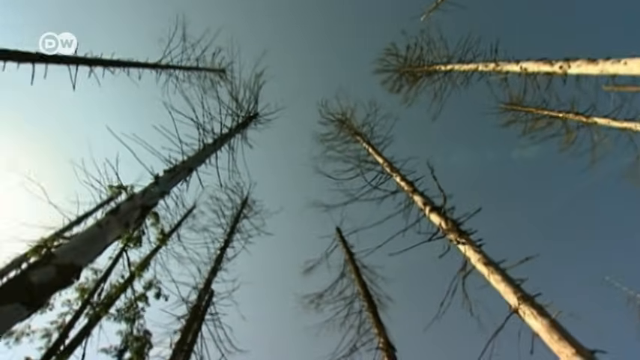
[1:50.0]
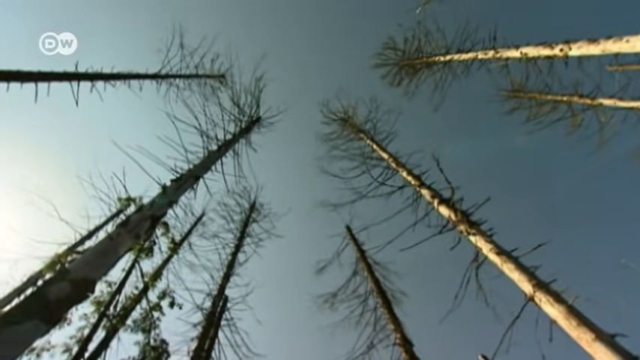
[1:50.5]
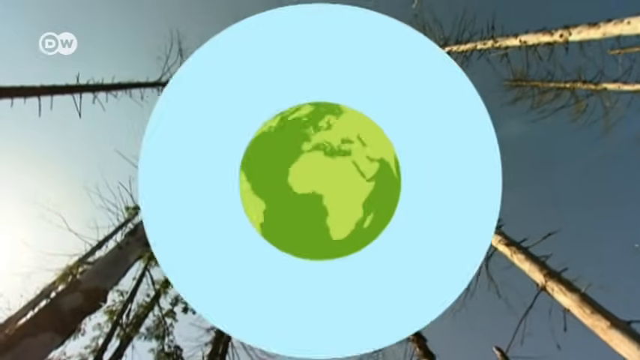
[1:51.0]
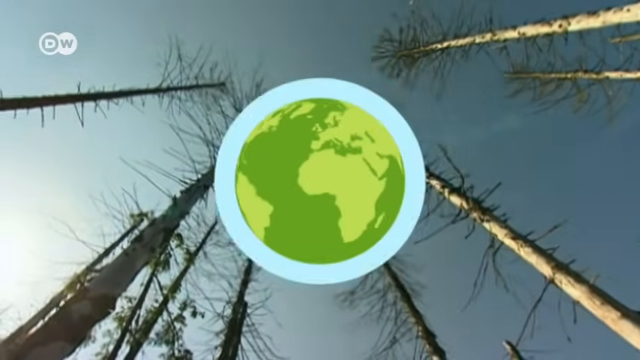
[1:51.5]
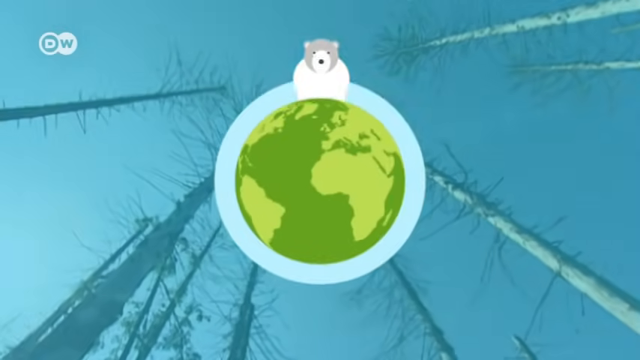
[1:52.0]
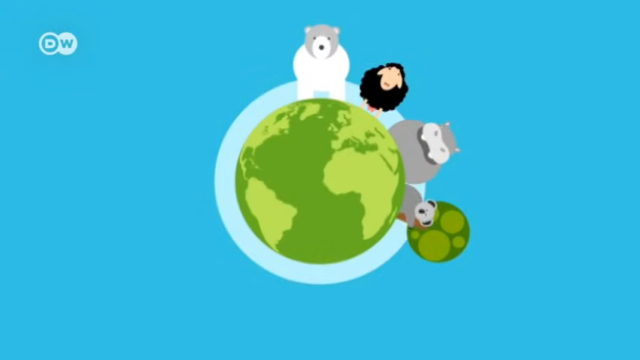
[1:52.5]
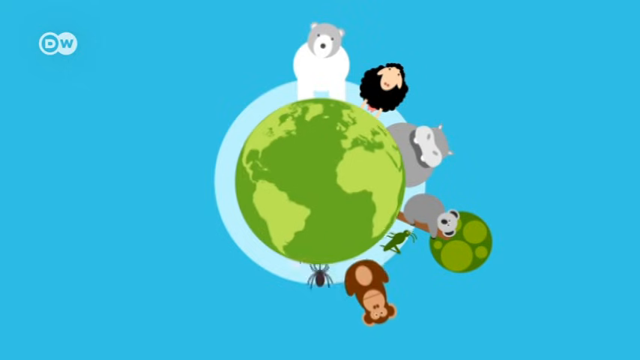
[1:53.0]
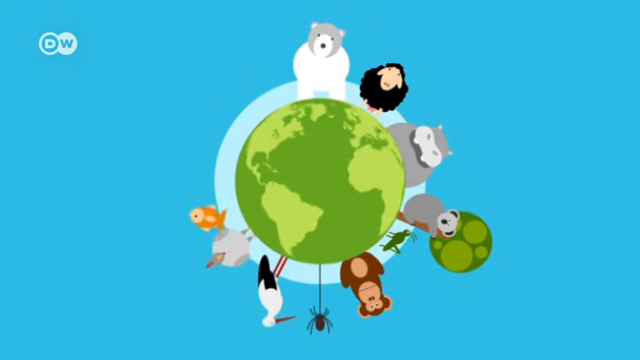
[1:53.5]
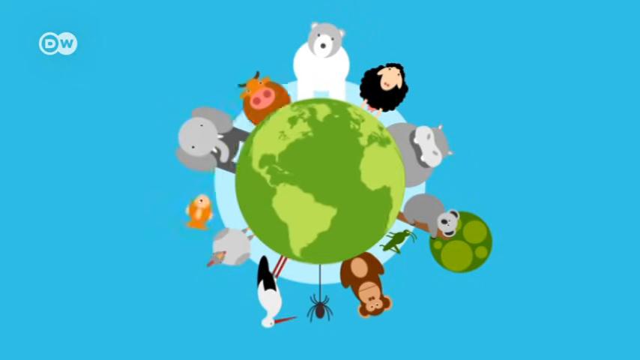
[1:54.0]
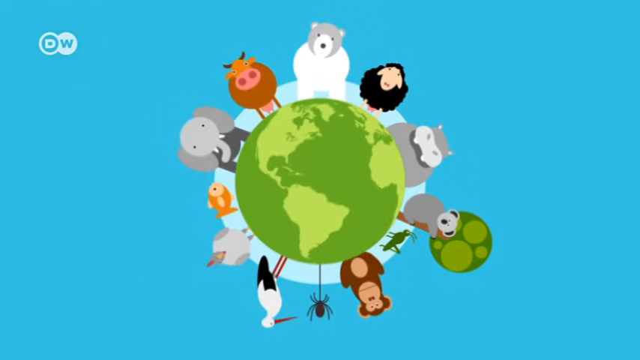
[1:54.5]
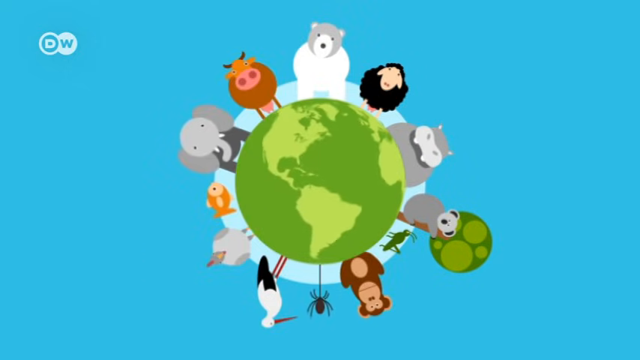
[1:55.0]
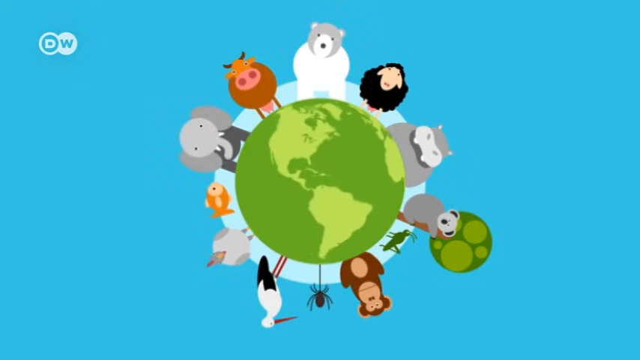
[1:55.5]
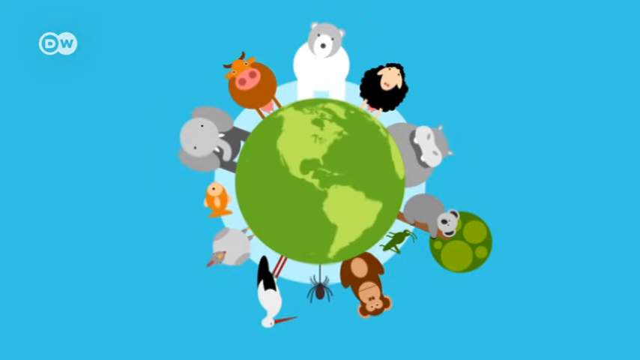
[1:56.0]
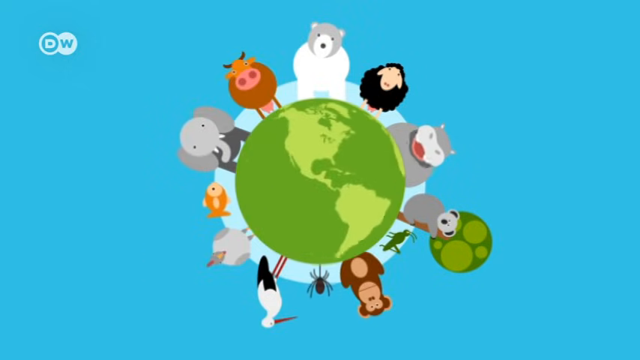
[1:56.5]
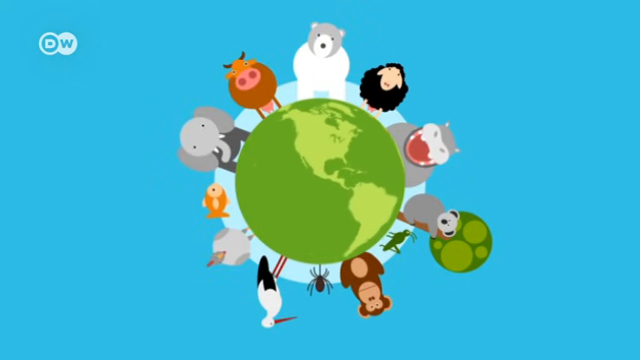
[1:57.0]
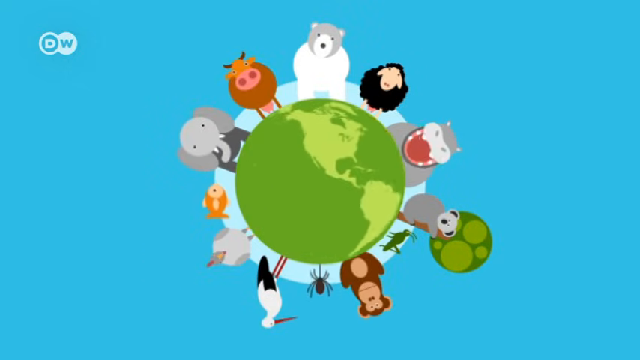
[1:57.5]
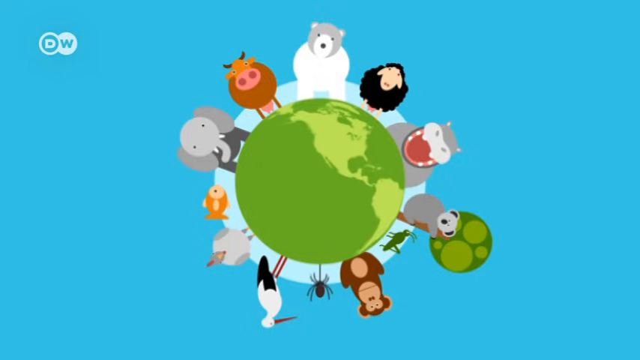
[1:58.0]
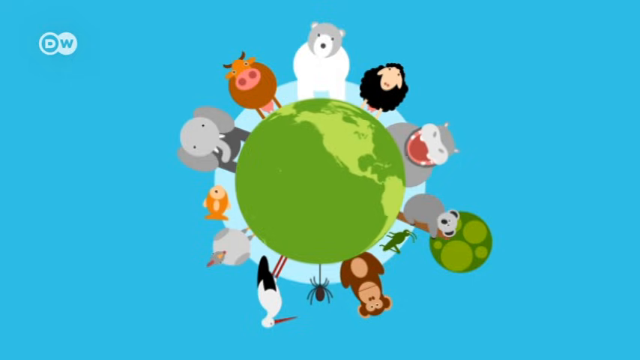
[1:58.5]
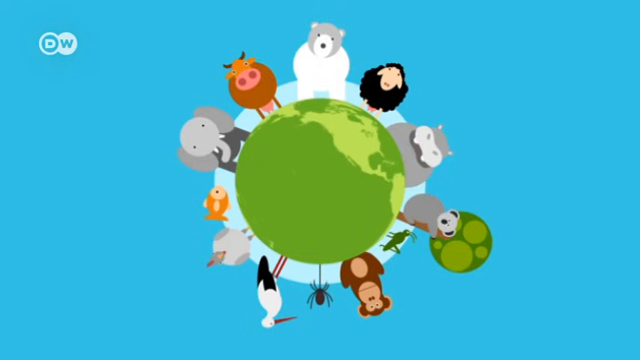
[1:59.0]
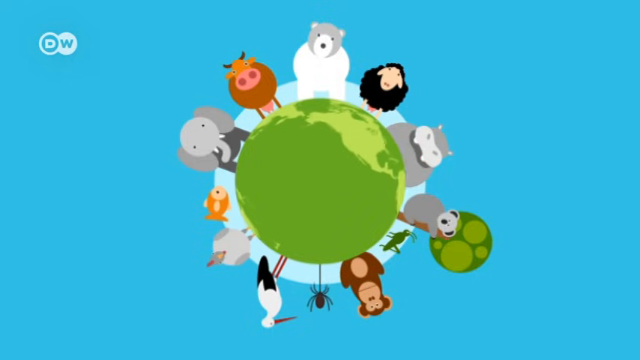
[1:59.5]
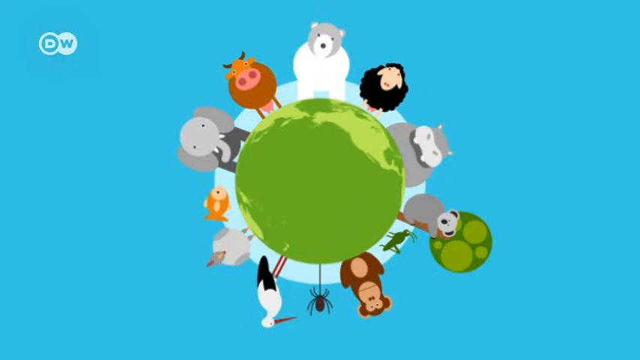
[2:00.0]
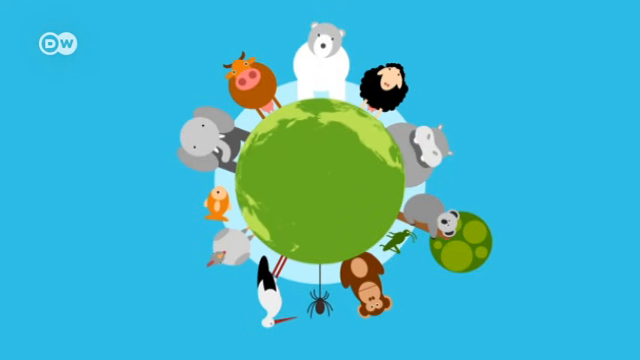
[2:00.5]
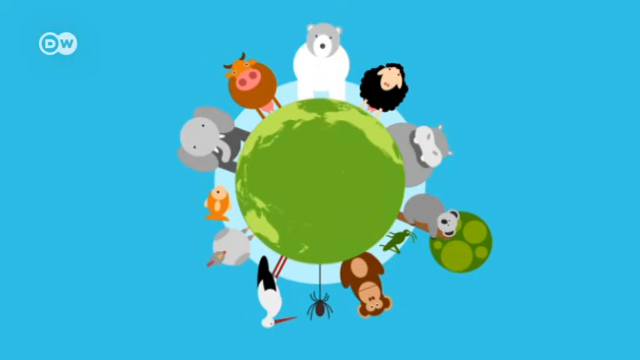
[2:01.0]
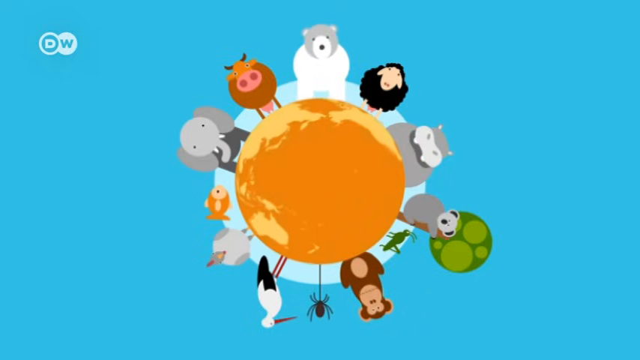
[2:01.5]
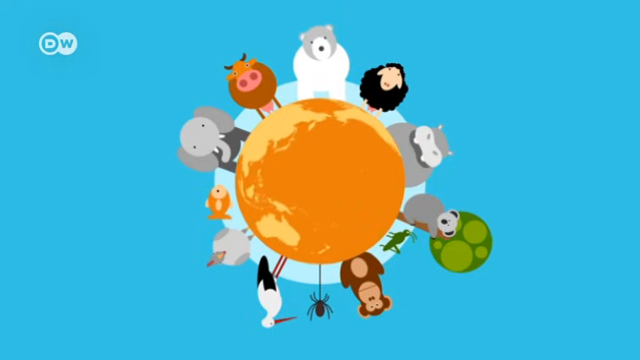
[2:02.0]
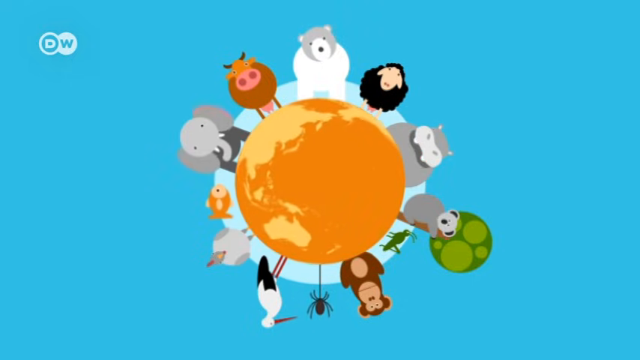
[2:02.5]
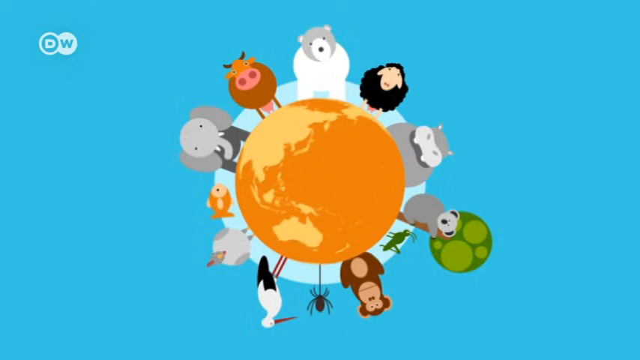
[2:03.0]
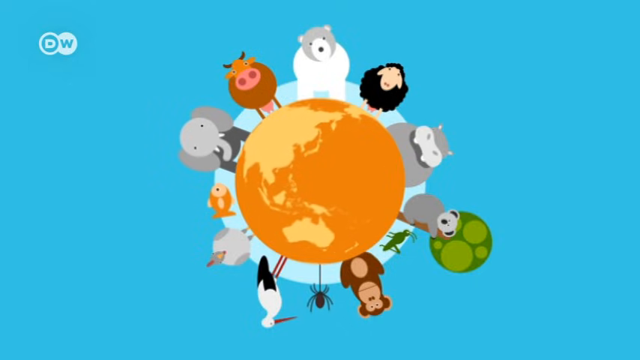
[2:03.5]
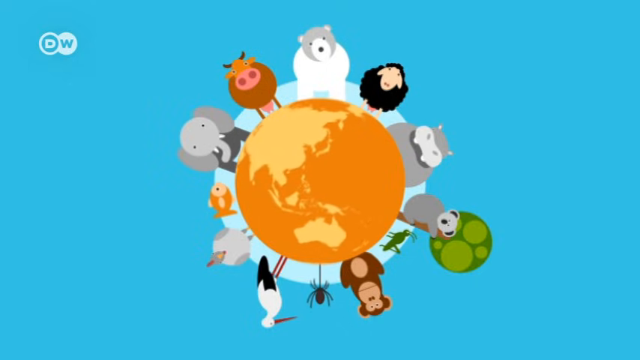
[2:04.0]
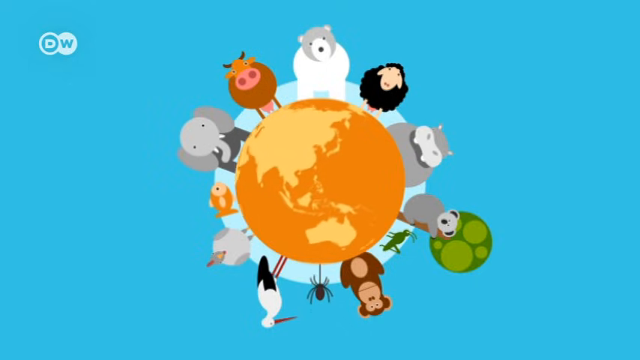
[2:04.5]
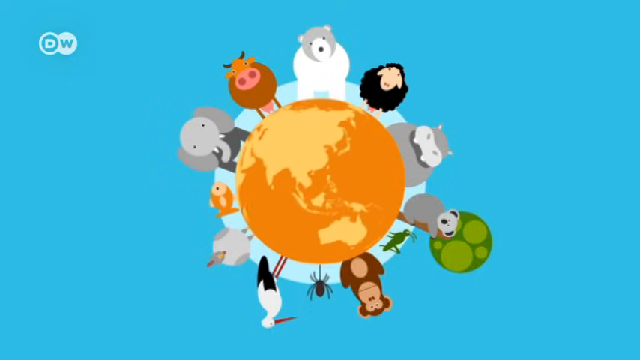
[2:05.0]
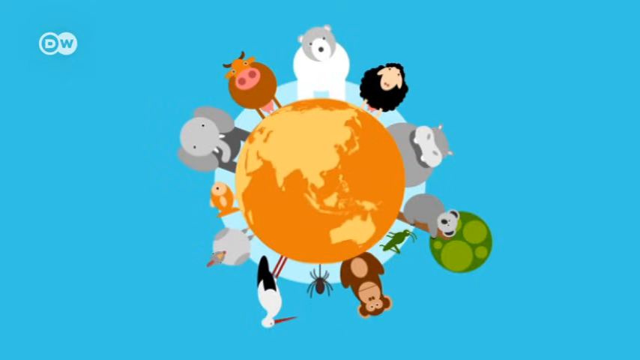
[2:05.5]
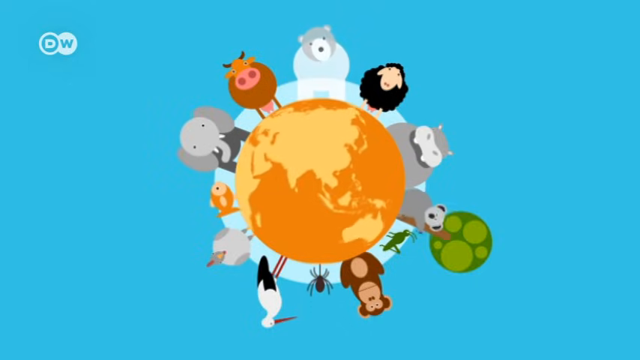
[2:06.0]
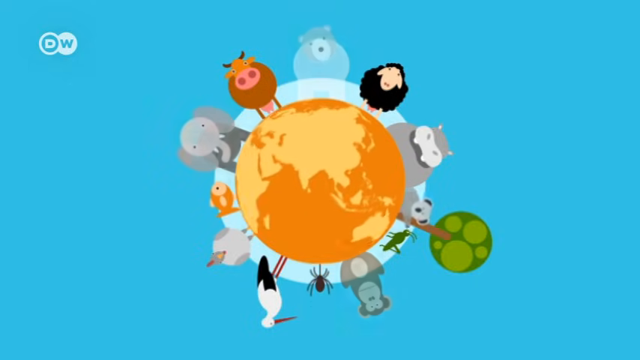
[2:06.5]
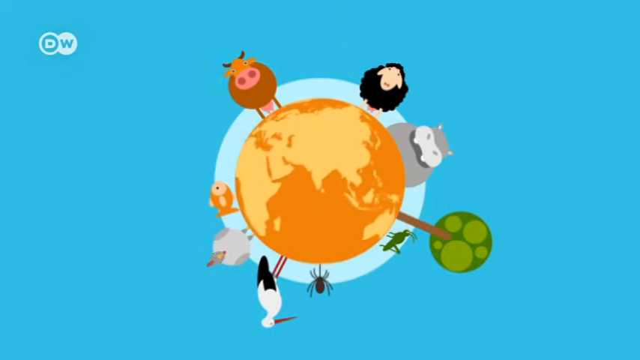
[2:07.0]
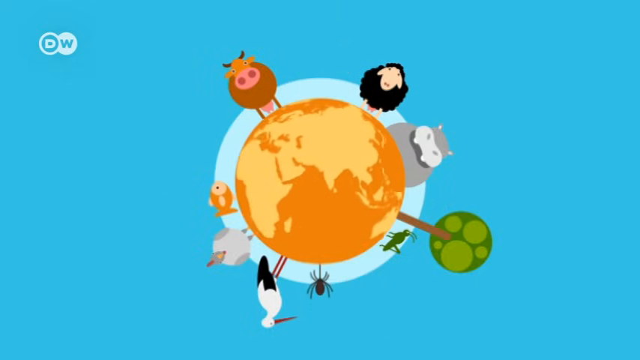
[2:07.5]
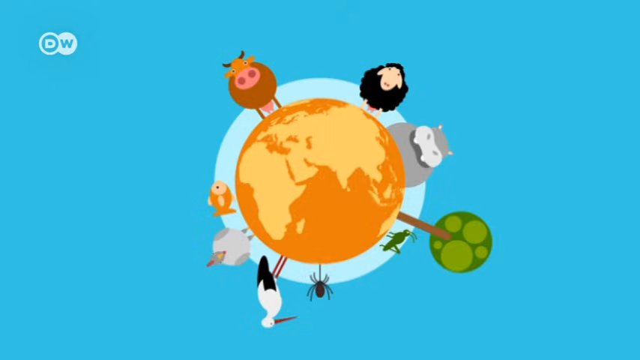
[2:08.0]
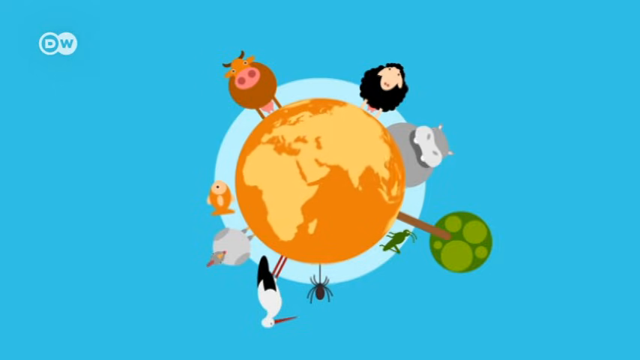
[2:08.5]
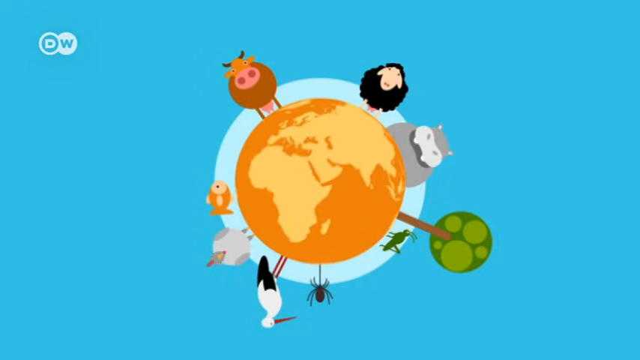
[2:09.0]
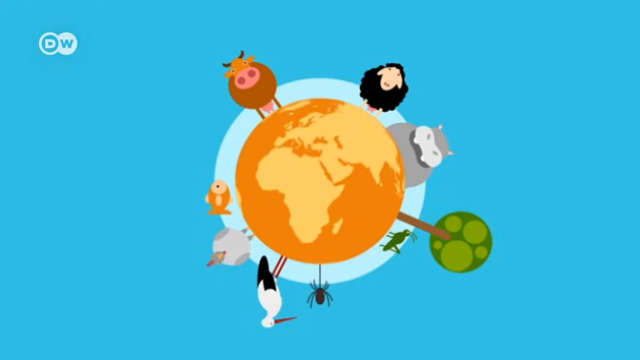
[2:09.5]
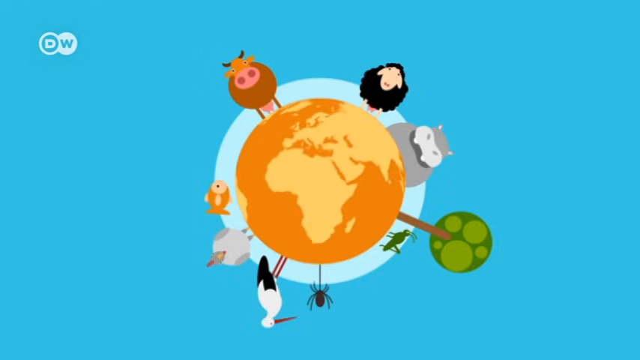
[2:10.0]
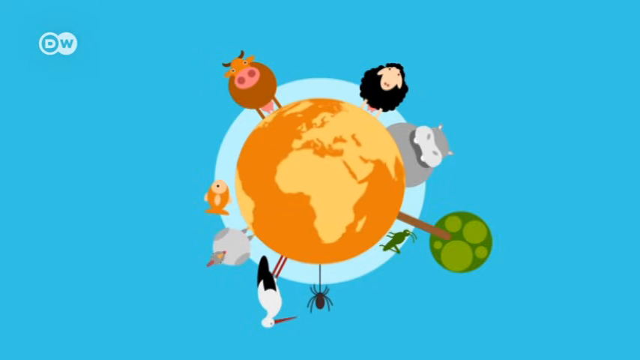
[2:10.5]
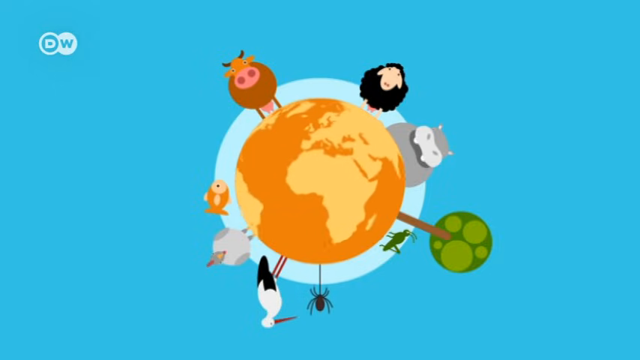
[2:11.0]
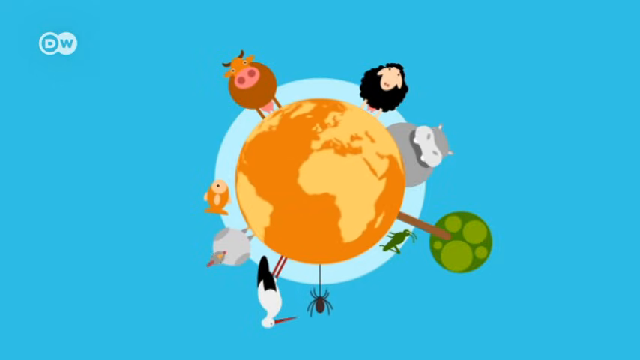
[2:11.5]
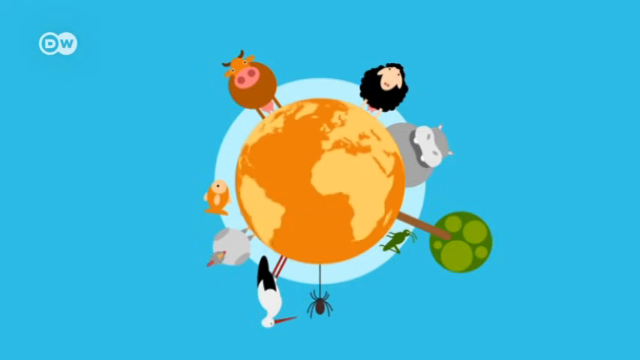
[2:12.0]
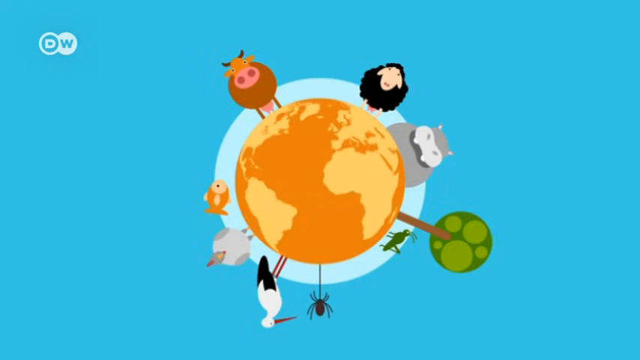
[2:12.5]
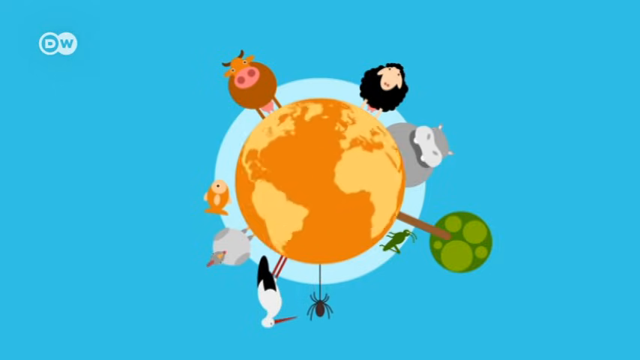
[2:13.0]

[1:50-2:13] The group of dead trees with absolutely no leaves continues to be shown in a bottom-up view as the camera spins around, making the trees appear extra tall and bald. Next, an animated green globe appears, and animals pop up from it, surrounding it: a koala, a sheep, a hippo, a polar bear, a monkey, some spiders, a bird, a fish, an elephant and a wild pig. The animals look happy as the green globe keeps spinning. The globe then changes from green to orange, and the animals disappear one by one, including the koala, the elephant and the monkey, possibly indicating the harm global warming does to certain animals. The DW network symbol, the word DW in two circles, is on the left-hand side of the screen.